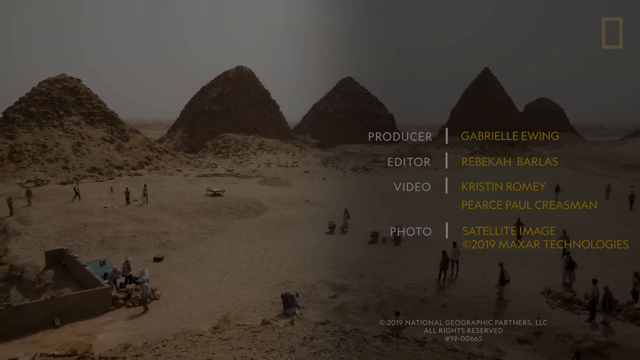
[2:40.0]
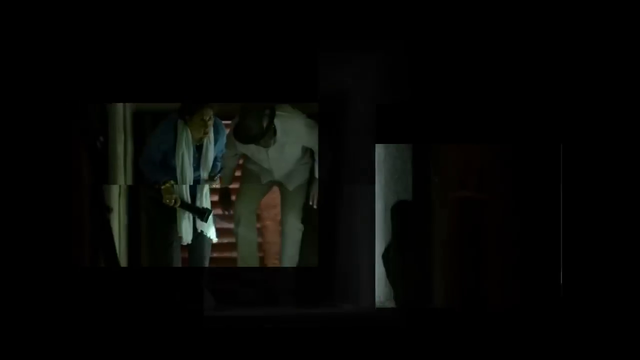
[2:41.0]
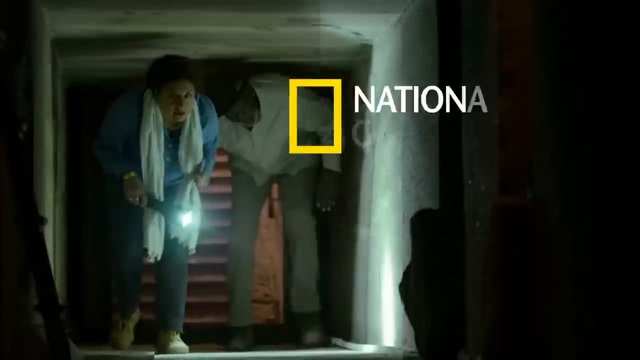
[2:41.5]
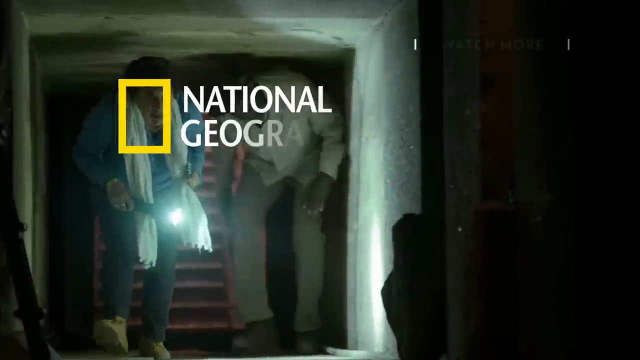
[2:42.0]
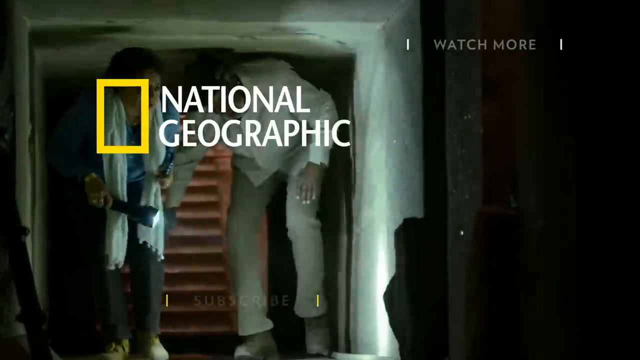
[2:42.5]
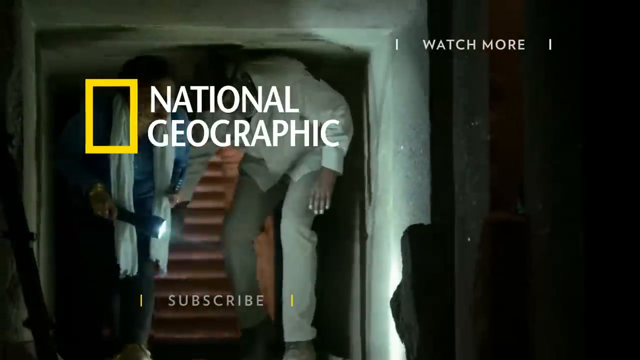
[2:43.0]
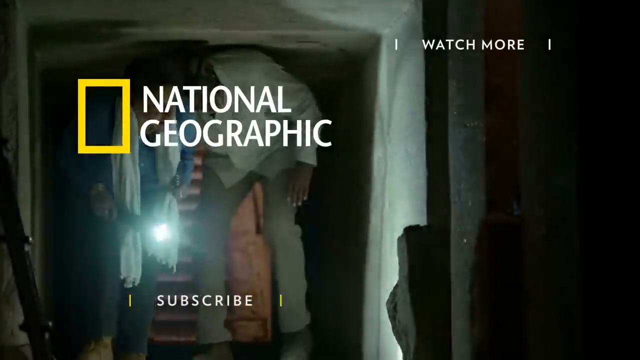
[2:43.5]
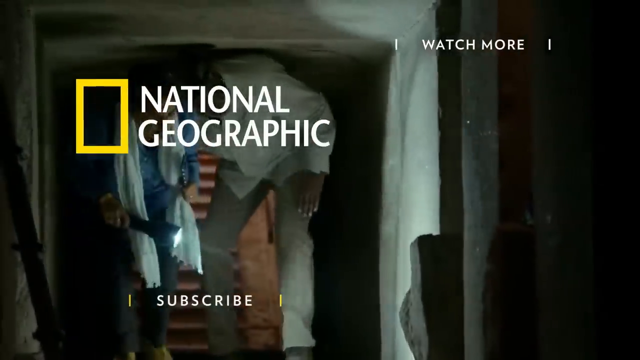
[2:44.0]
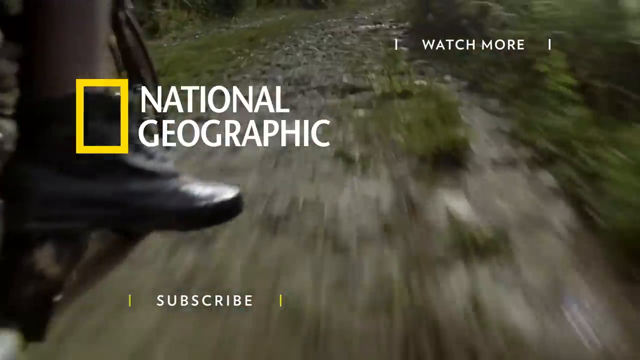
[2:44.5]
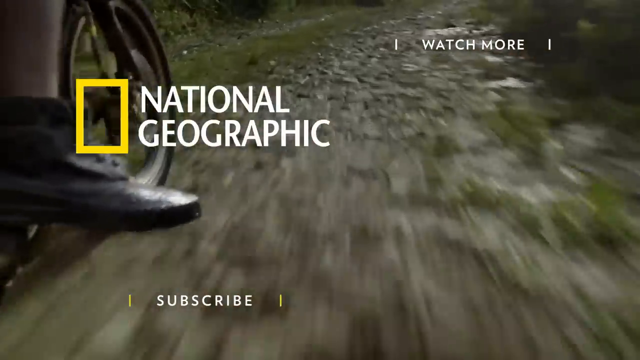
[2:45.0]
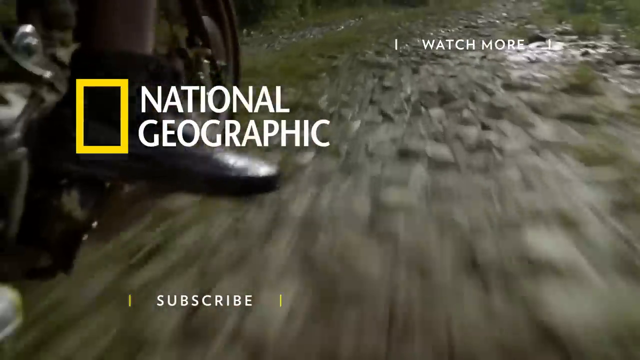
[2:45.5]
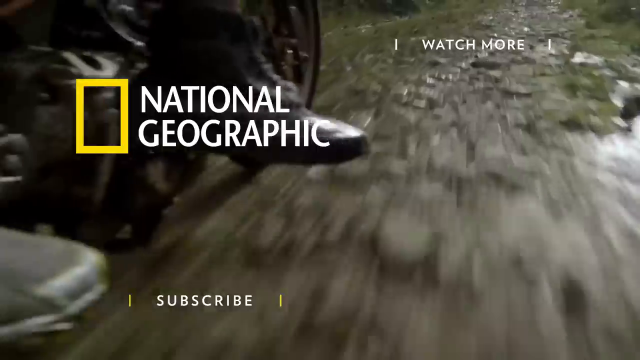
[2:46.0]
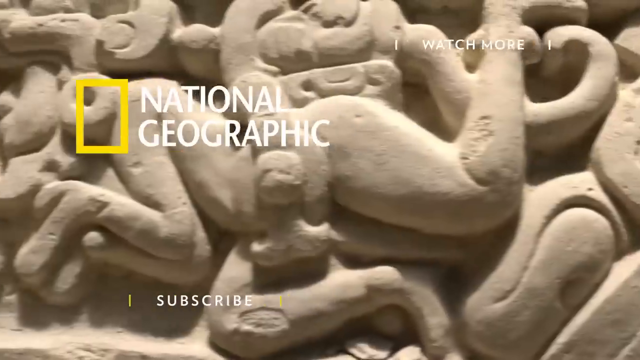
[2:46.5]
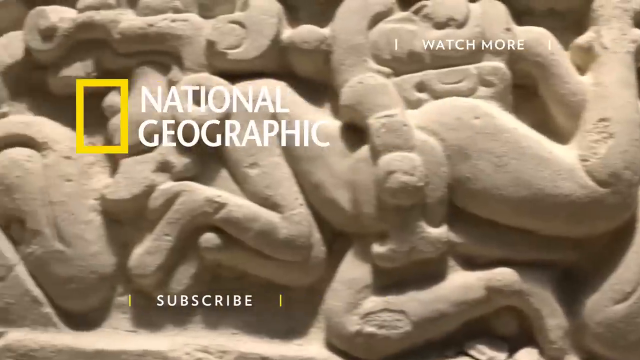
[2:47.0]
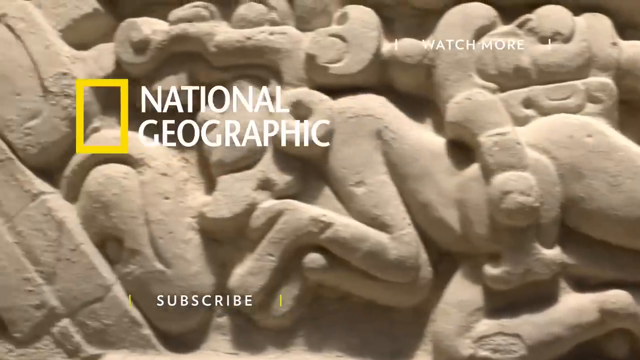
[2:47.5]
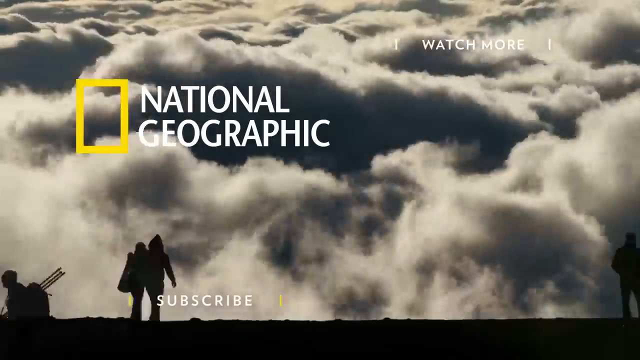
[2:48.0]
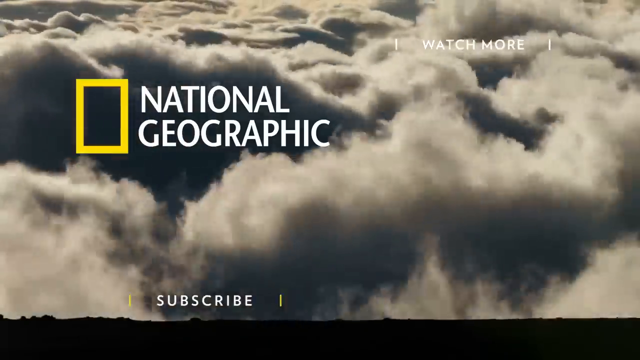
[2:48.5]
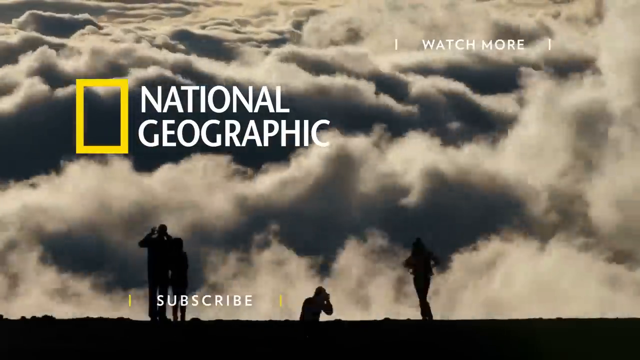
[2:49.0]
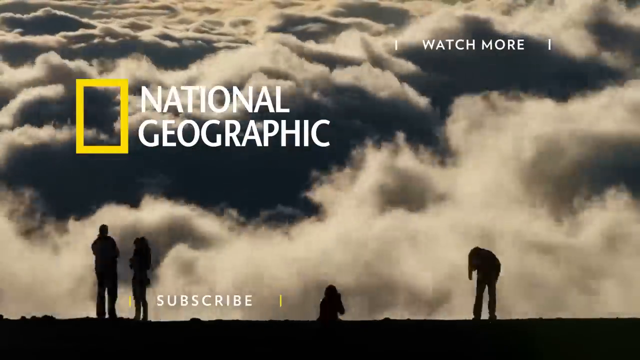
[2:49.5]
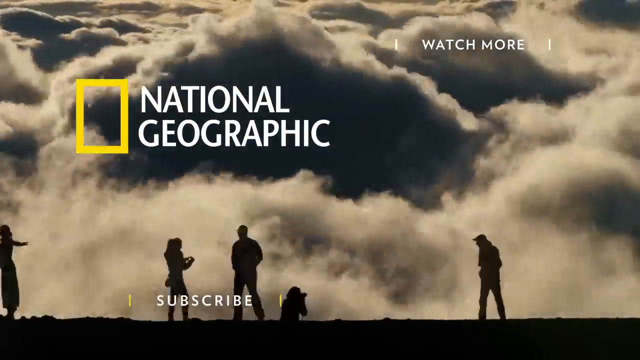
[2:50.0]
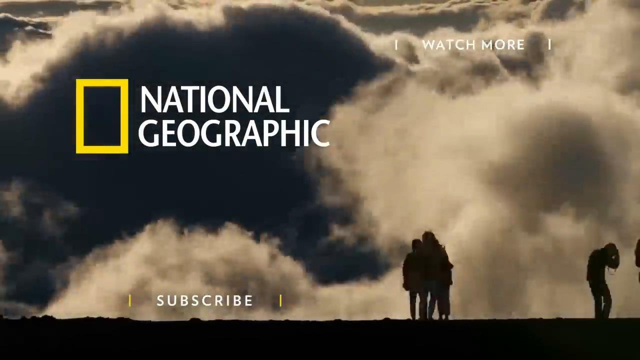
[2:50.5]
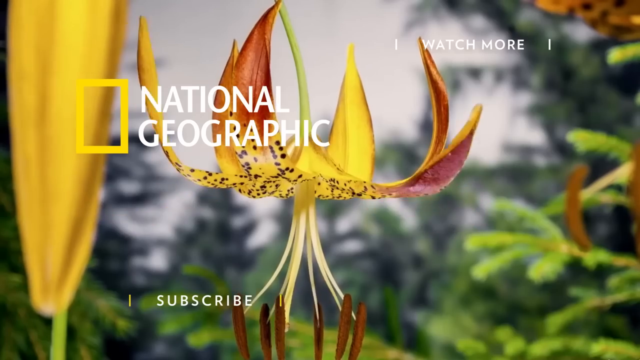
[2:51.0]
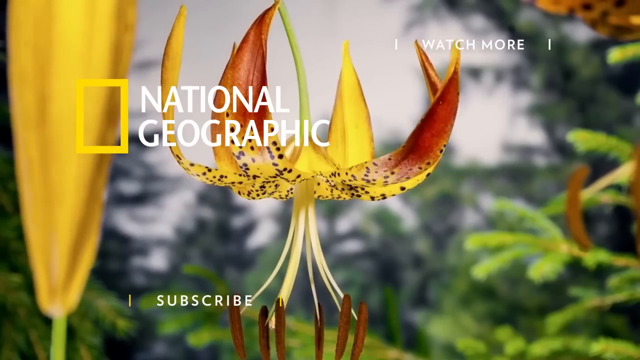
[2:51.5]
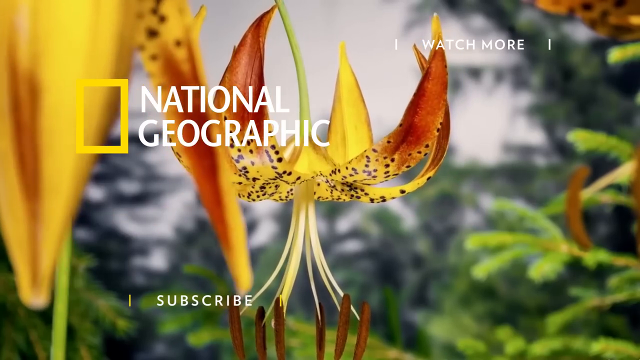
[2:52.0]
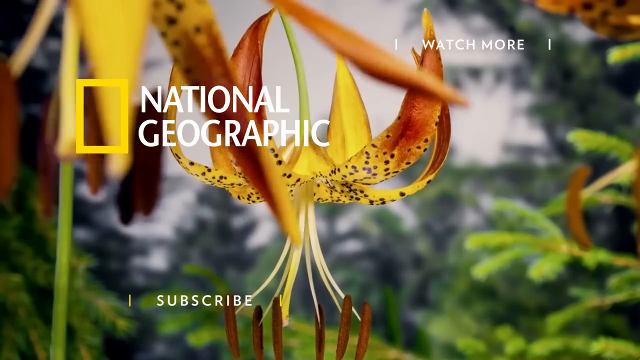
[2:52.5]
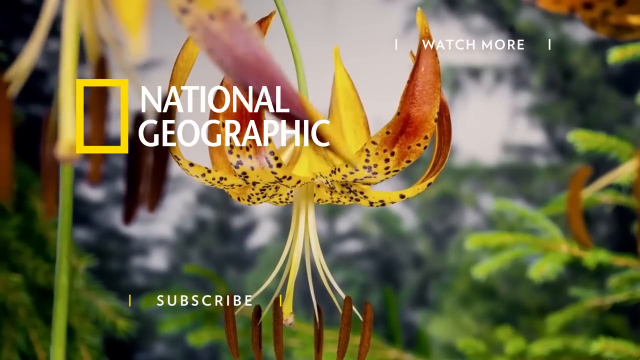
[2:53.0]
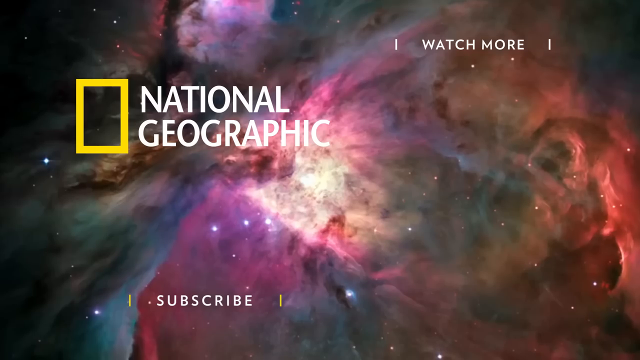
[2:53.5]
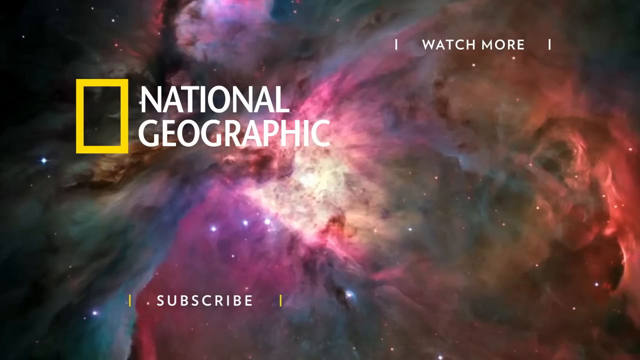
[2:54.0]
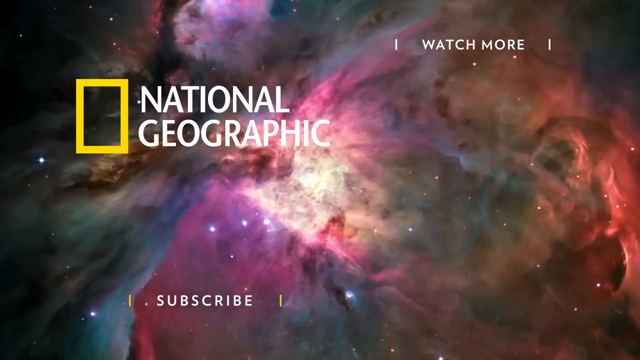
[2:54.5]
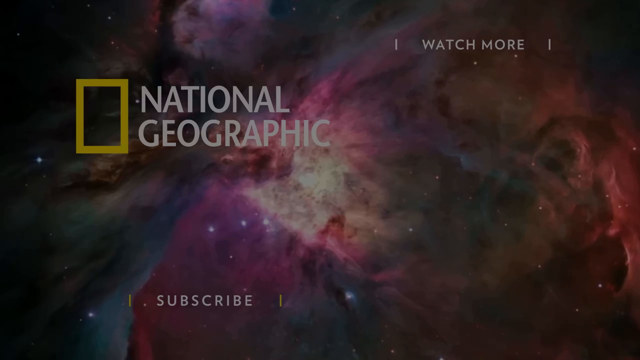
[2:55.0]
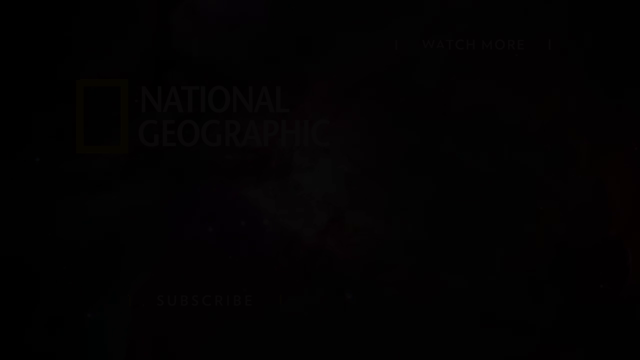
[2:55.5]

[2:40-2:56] The video closes with a National Geographic ending that shows different scenes from various explorations around the world, with no further parts of the excavation. This footer asks viewers to like and subscribe to the National Geographic channel.